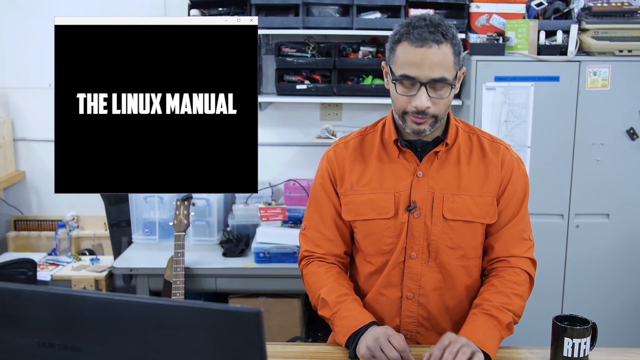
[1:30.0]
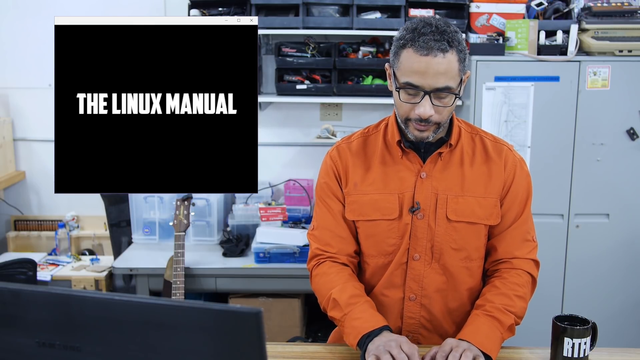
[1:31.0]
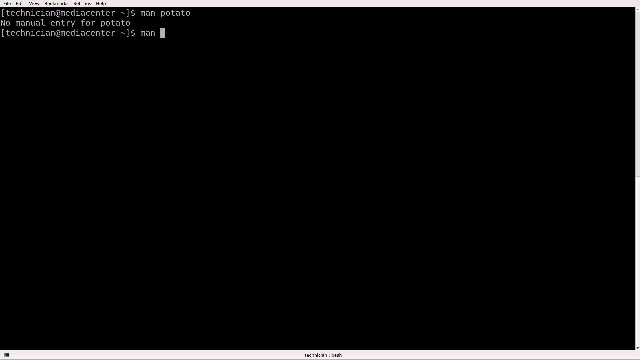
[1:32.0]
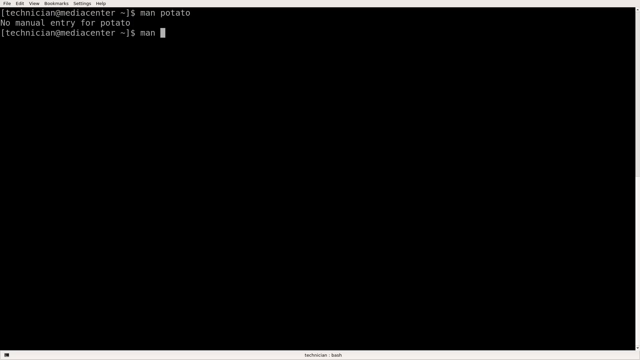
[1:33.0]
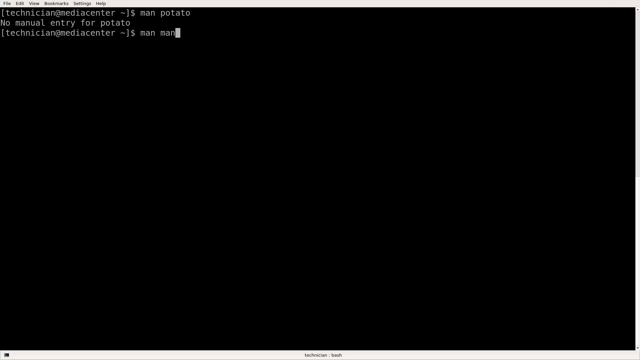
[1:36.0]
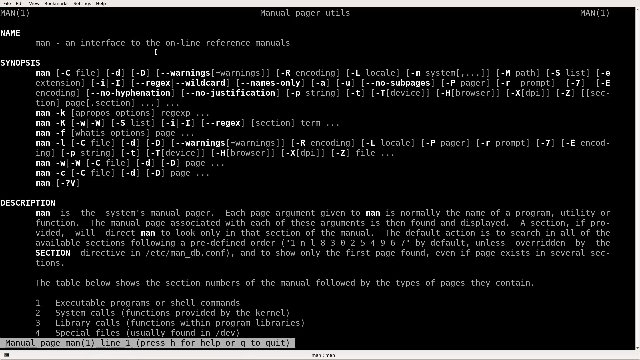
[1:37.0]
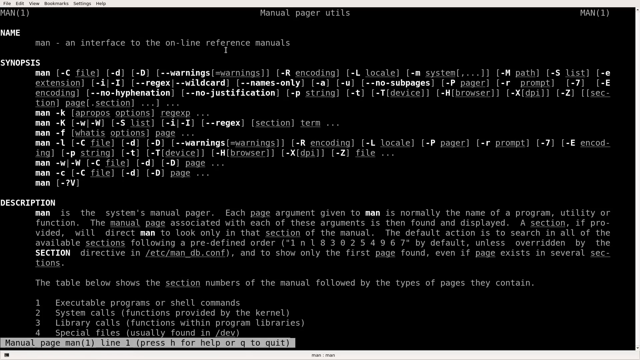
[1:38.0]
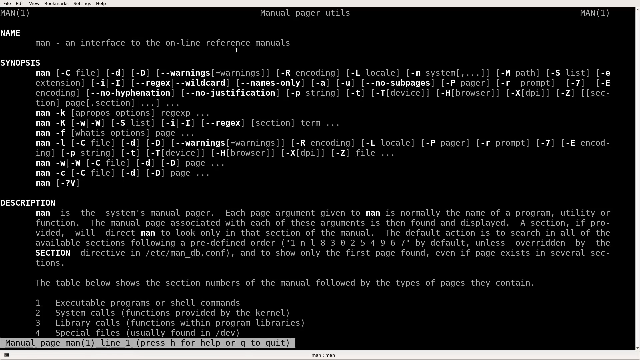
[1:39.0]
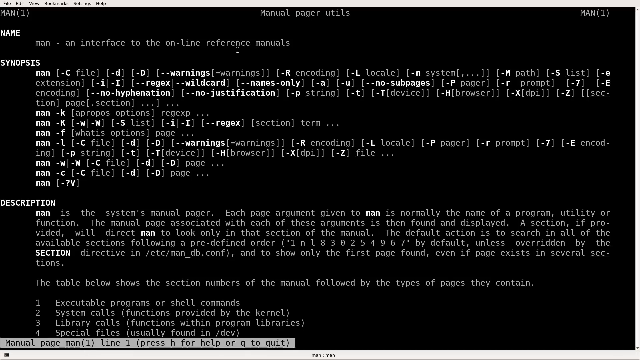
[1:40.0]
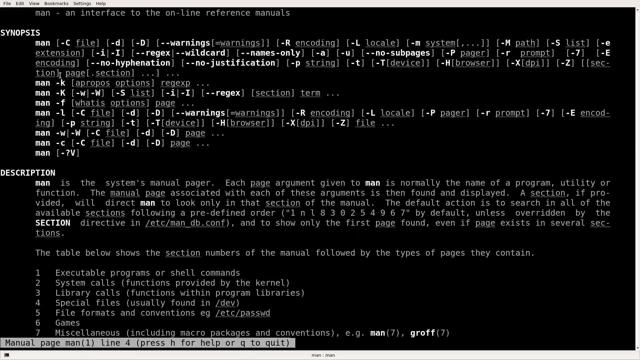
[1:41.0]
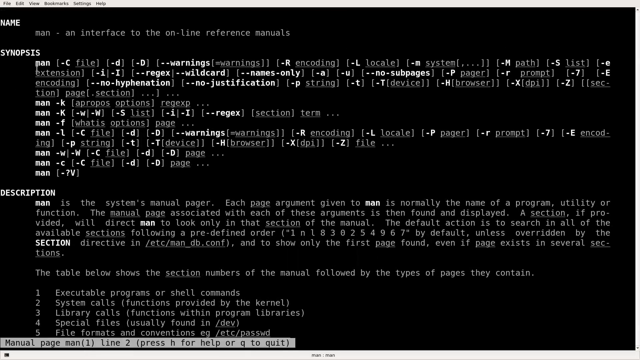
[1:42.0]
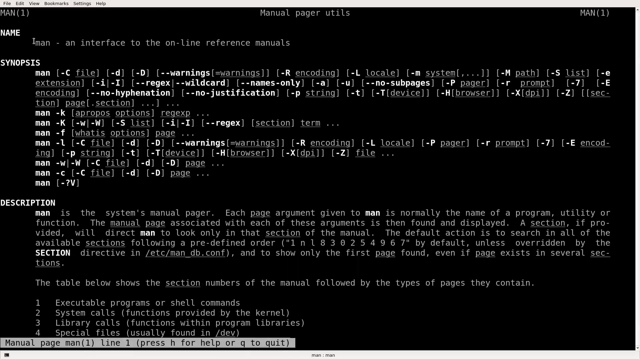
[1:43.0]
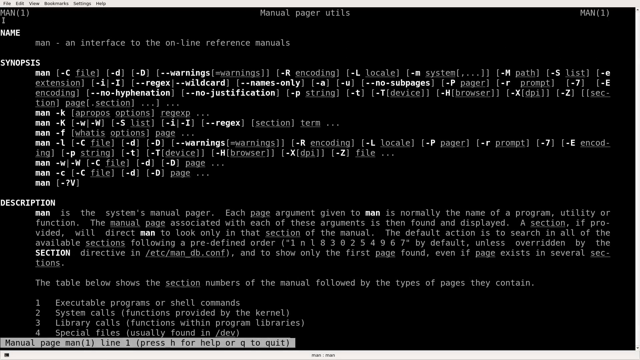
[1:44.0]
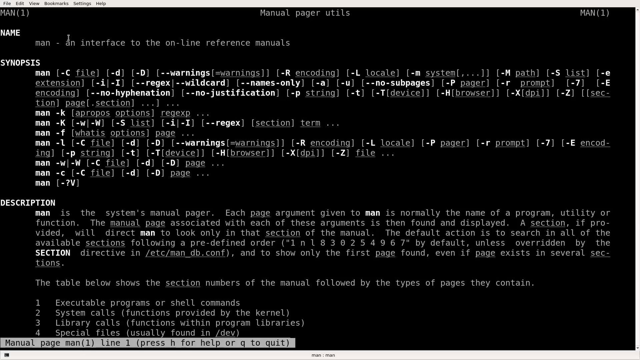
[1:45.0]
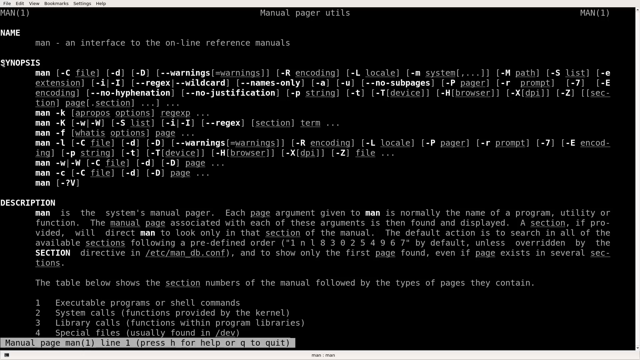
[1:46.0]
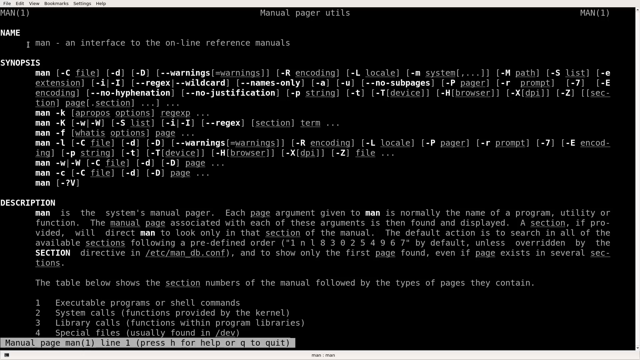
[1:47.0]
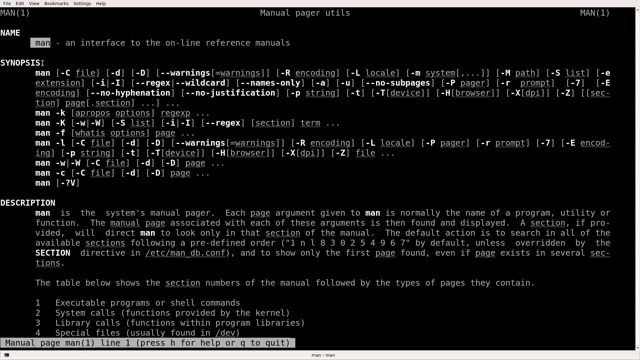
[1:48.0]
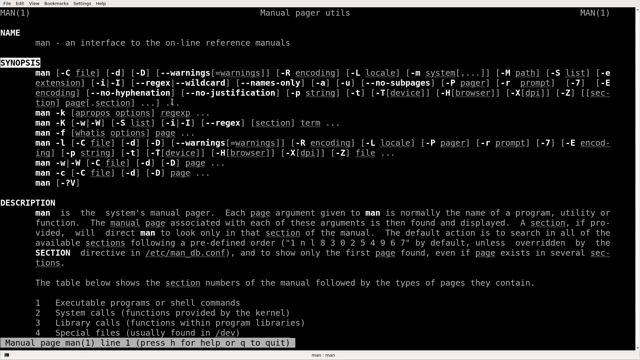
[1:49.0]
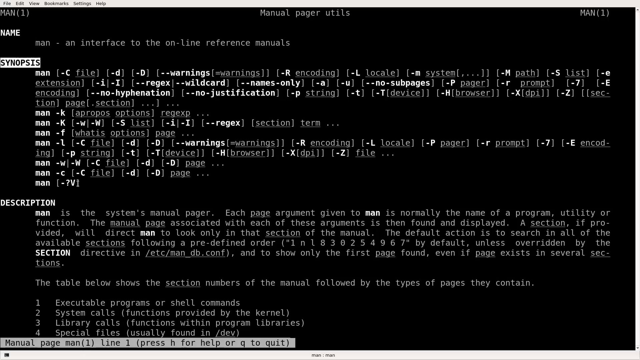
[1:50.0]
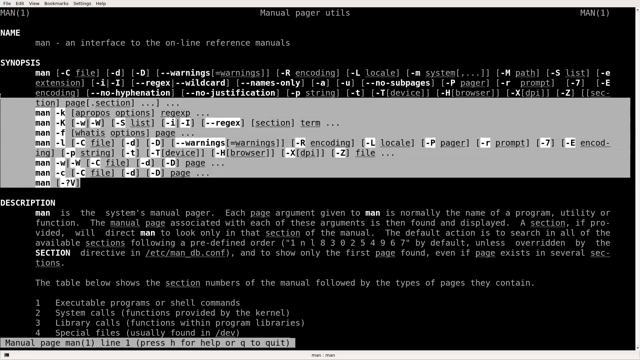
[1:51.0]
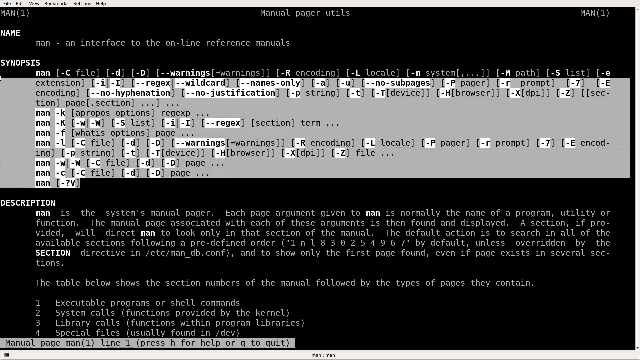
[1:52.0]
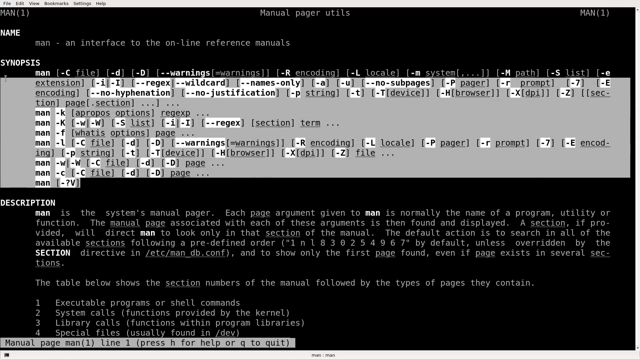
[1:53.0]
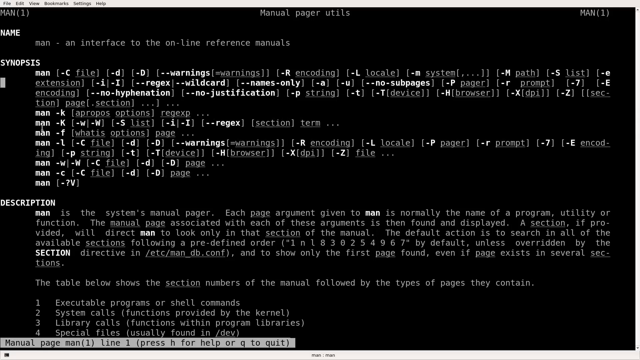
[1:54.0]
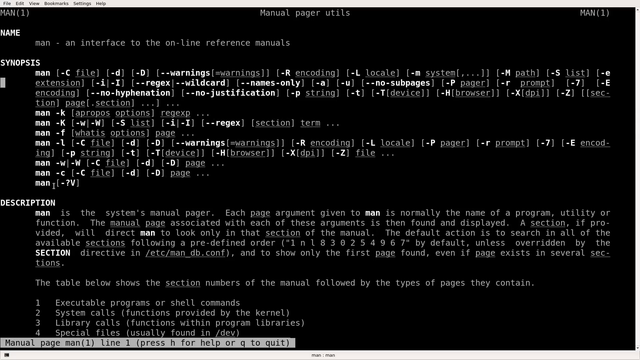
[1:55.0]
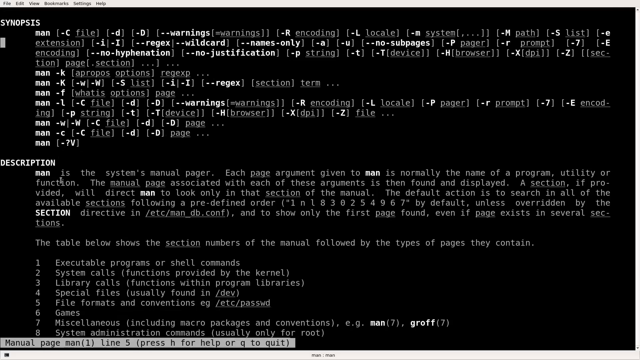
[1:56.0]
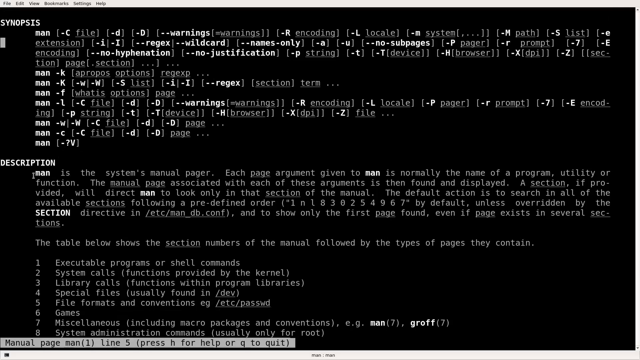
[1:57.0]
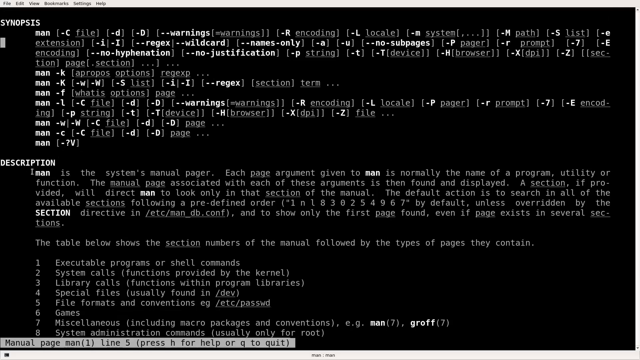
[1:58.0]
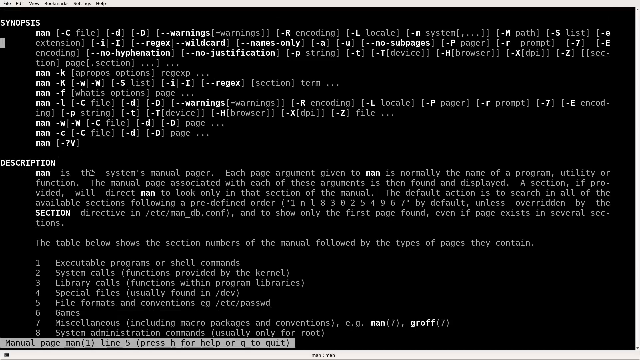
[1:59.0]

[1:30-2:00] The man in the orange shirt, who does all of the talking in the video, taps something on the table, and the command screen comes up again. It shows the name entry "man" with "interface to the online reference," and the heading reads "manual pager" along with "UTILS," apparently an abbreviation for utilities. Under the name heading is synopsis for man, apparently from a search for man, with subheadings and various letters, apparently for commands. Underneath is a description reading "man is the system's manual pager," with more information below, including "each page argument given to man is normally the name of the program." Part of the page under the synopsis is briefly highlighted, apparently to mark information relevant to the tutorial, and then the highlight goes away.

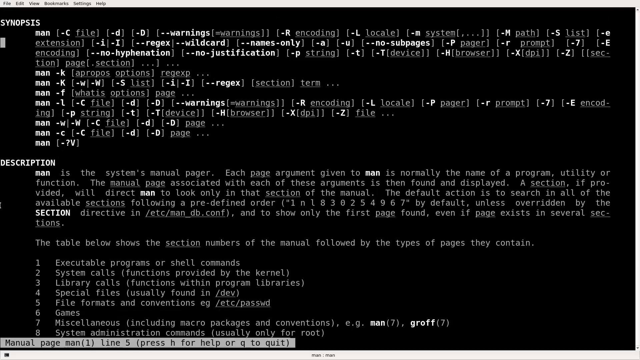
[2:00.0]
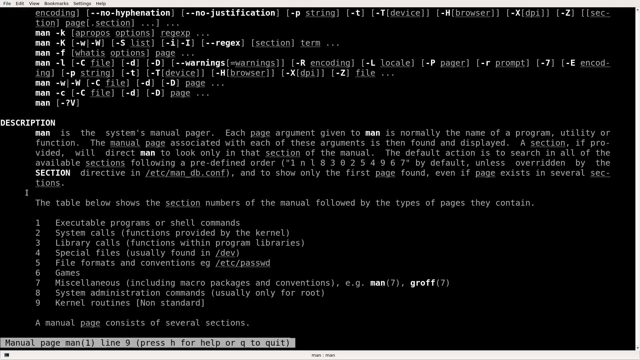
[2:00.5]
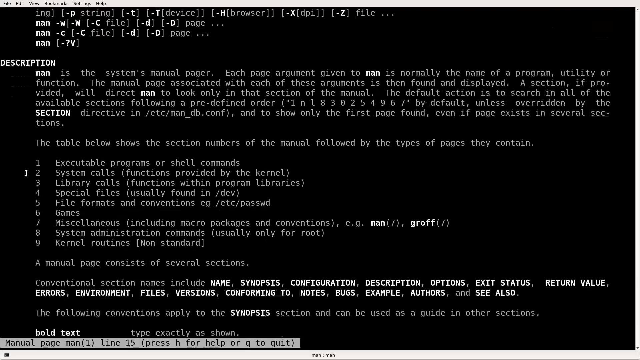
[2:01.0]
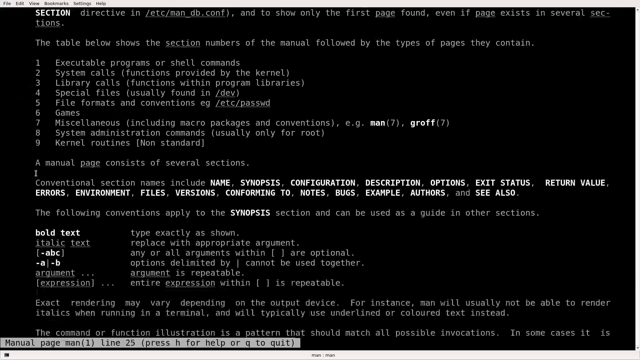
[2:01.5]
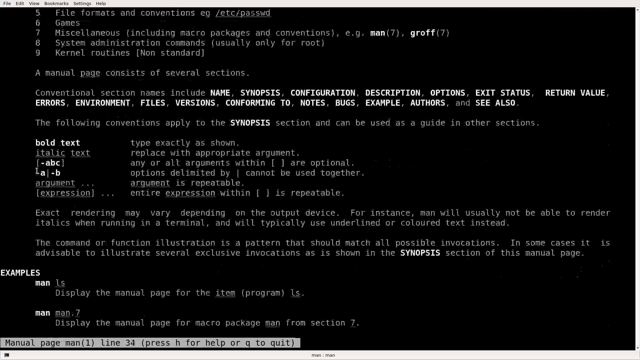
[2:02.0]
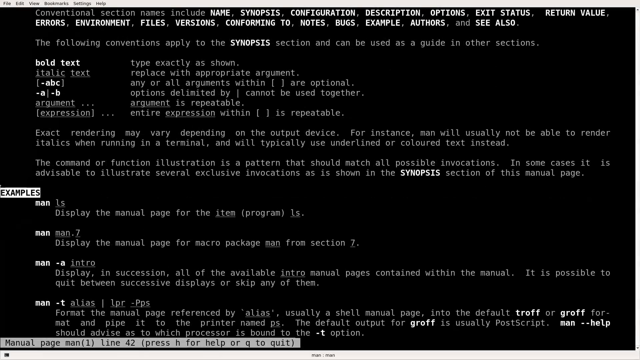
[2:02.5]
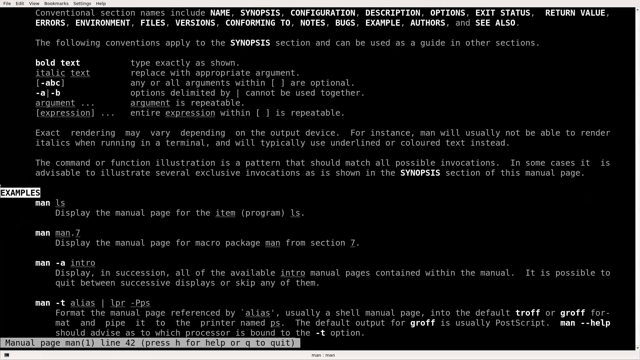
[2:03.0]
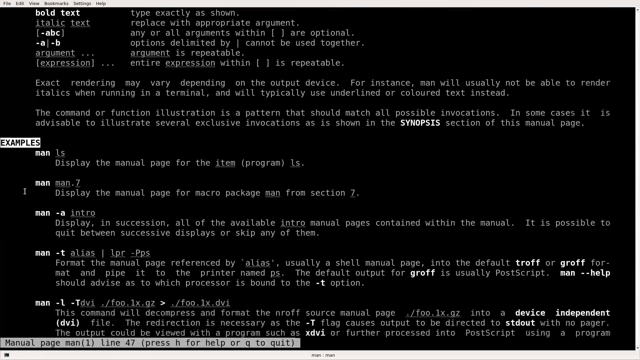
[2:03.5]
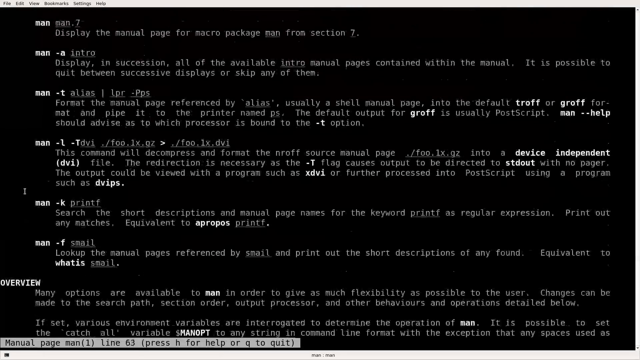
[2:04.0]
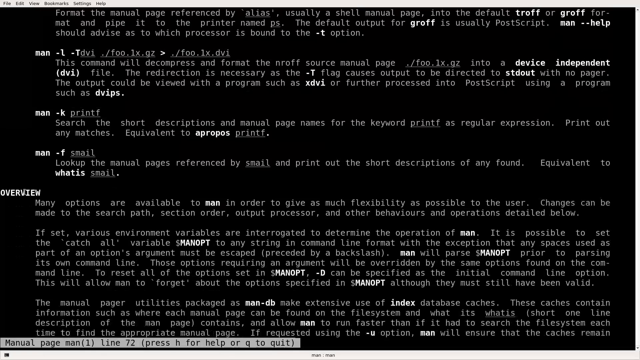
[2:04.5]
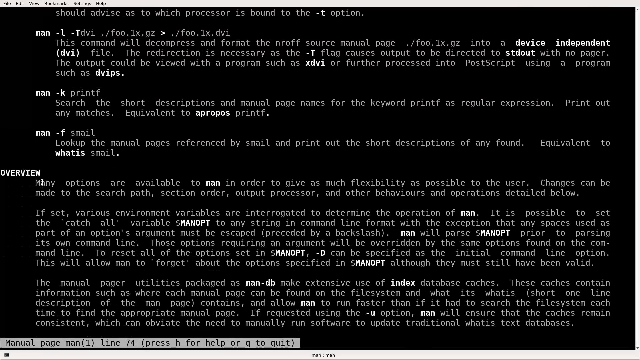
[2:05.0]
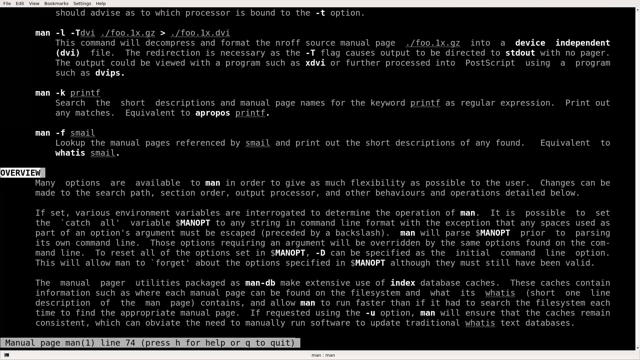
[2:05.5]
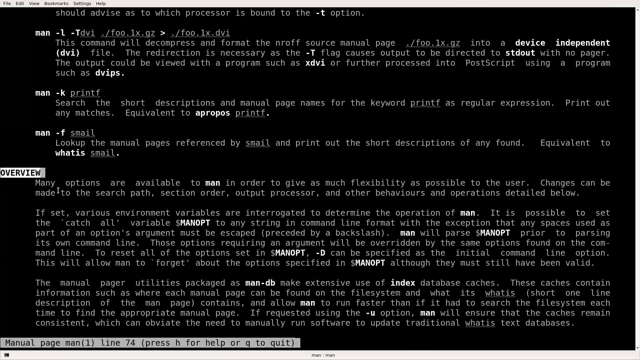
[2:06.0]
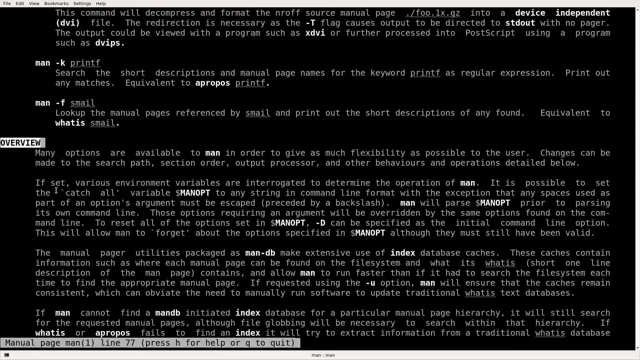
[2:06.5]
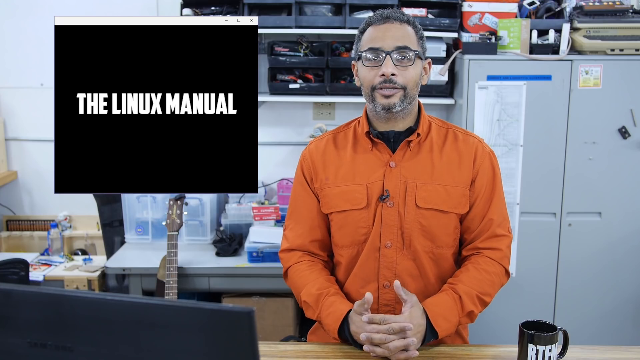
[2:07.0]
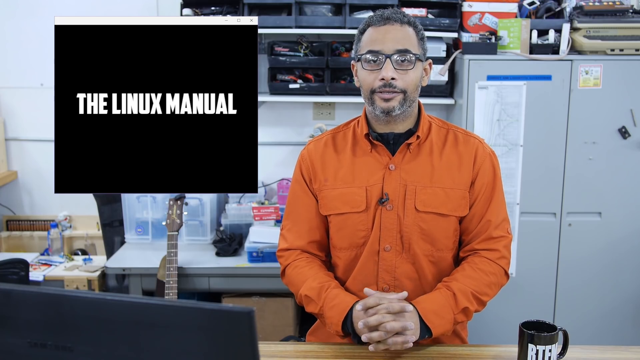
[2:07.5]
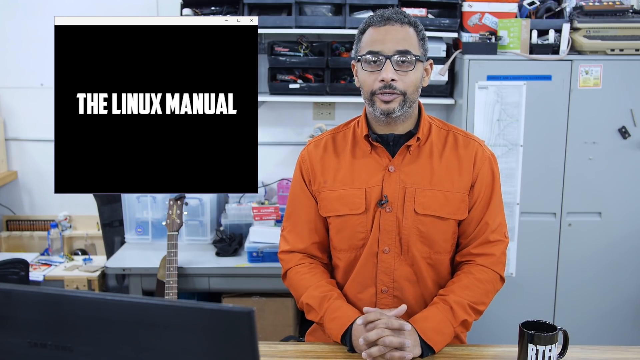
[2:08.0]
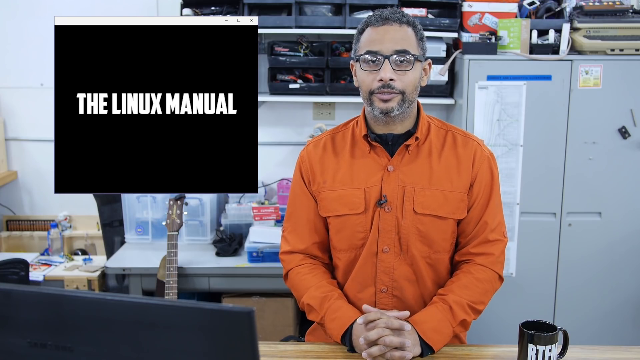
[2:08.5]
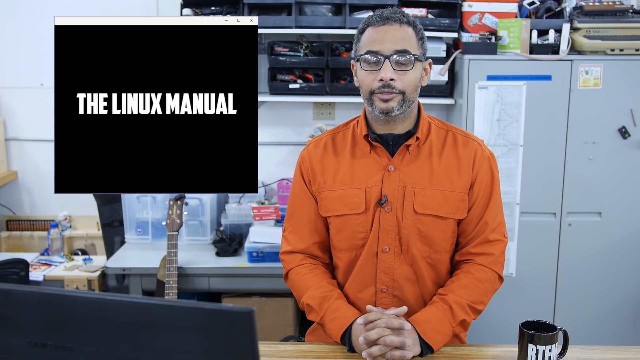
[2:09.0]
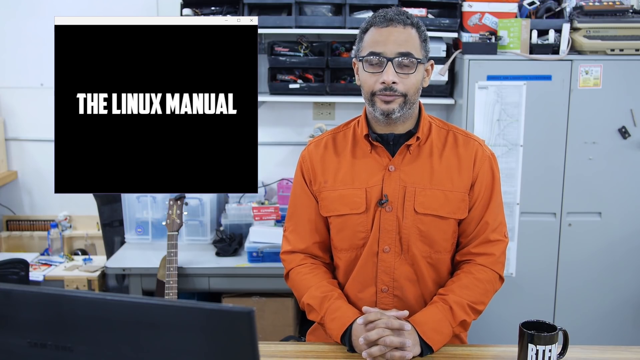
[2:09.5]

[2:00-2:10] The screen shows the page brought up by the search for man. The person scrolls down to another section reading "a manual page consists of several sections." One area reads "bold text" with "type exactly as shown," with a list of commands underneath. "Overview" is highlighted, with some information shown there. The video stays within the Linux command area, briefly showing the man with his hands folded, not working at the station, talking briefly, before panning back to the mainly black computer screen, ending on the overview section.